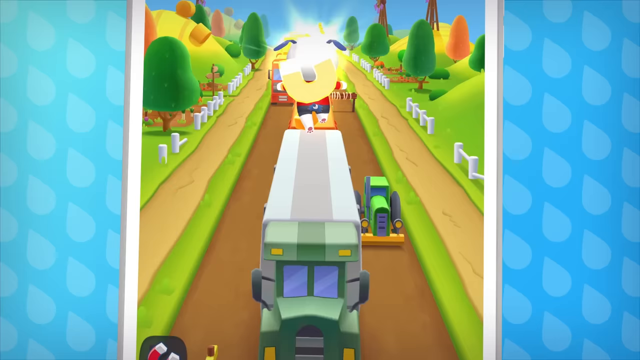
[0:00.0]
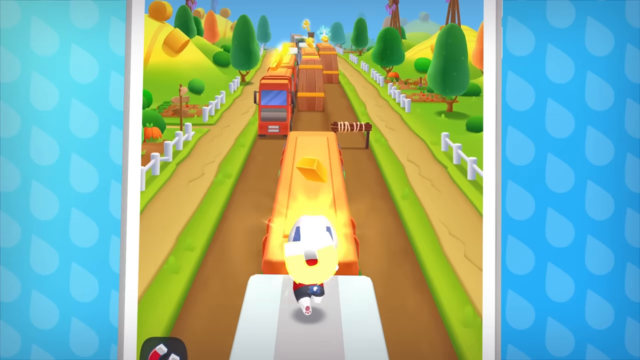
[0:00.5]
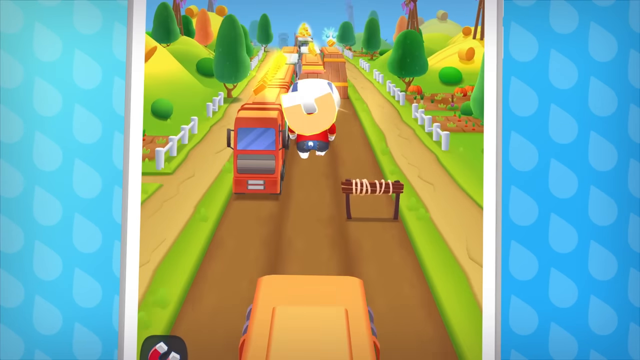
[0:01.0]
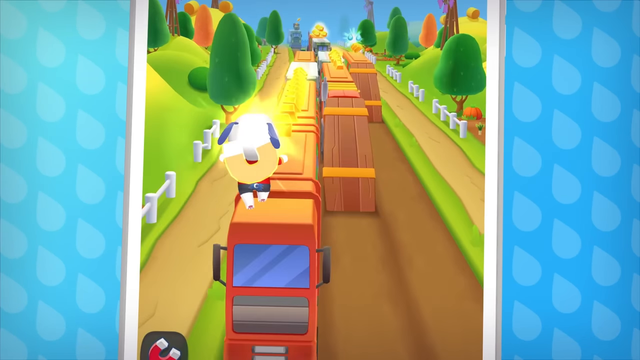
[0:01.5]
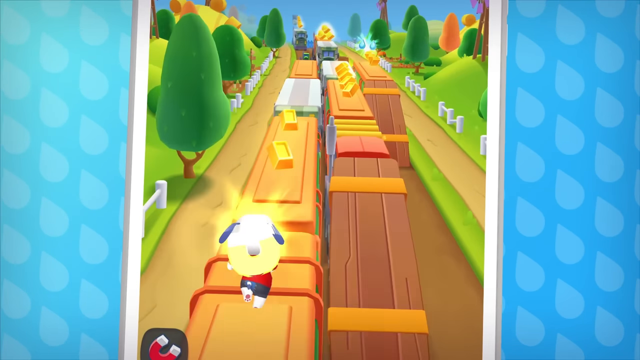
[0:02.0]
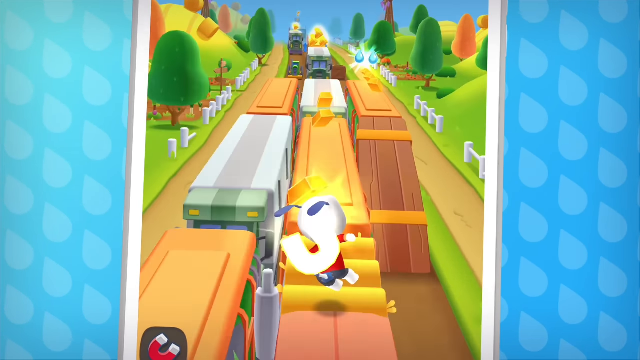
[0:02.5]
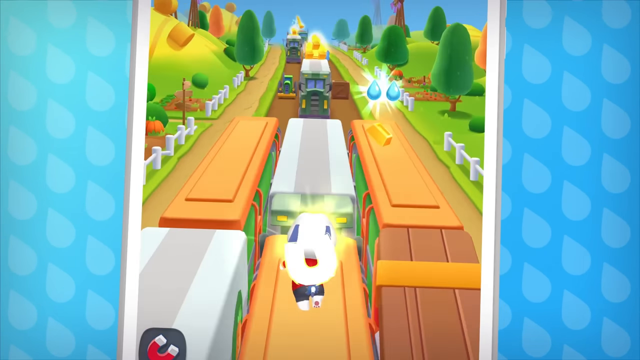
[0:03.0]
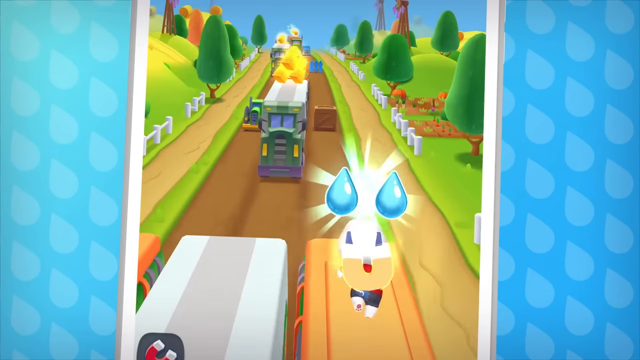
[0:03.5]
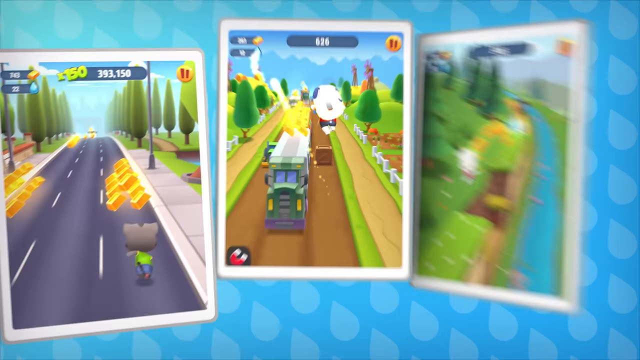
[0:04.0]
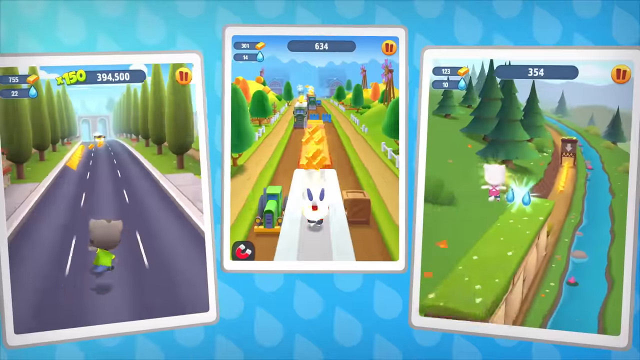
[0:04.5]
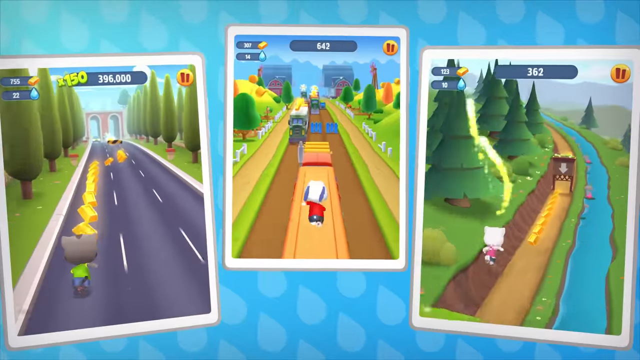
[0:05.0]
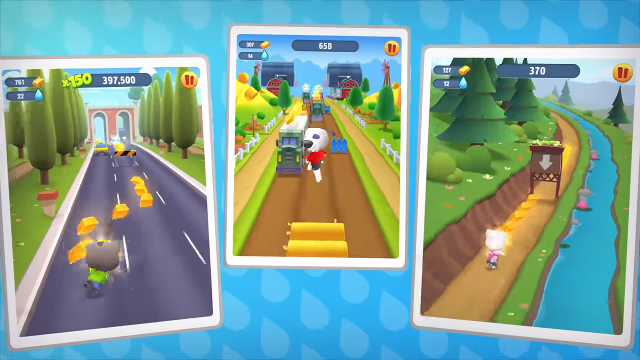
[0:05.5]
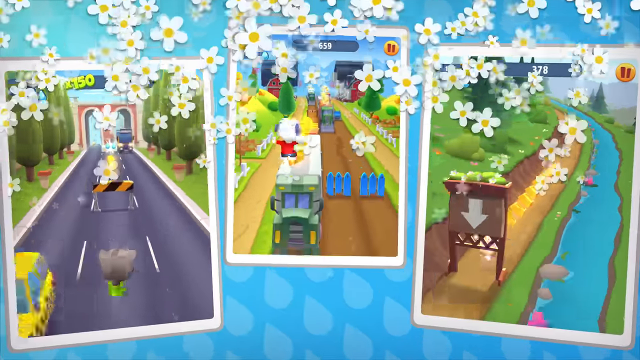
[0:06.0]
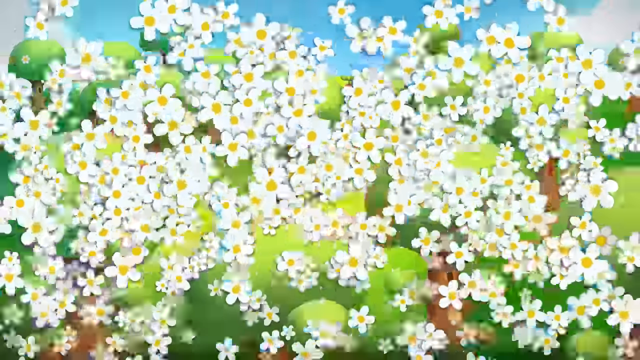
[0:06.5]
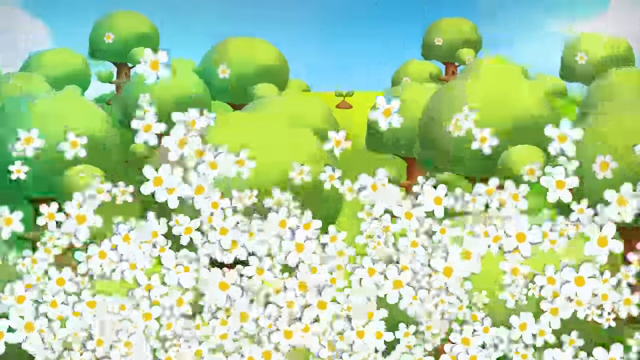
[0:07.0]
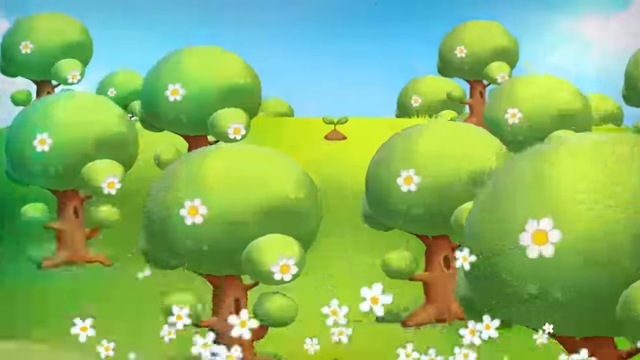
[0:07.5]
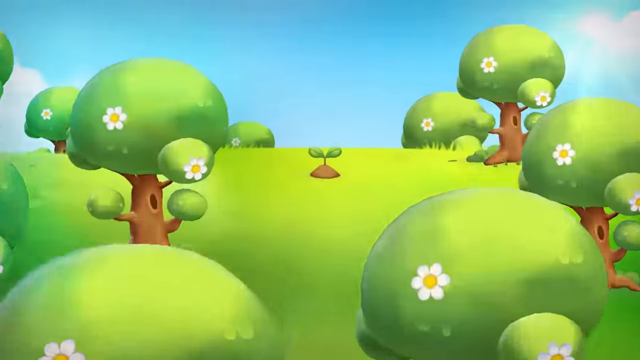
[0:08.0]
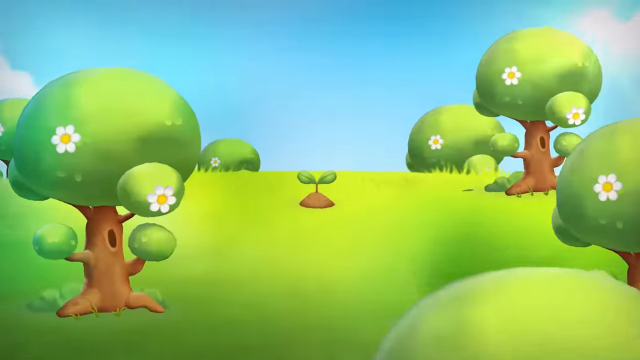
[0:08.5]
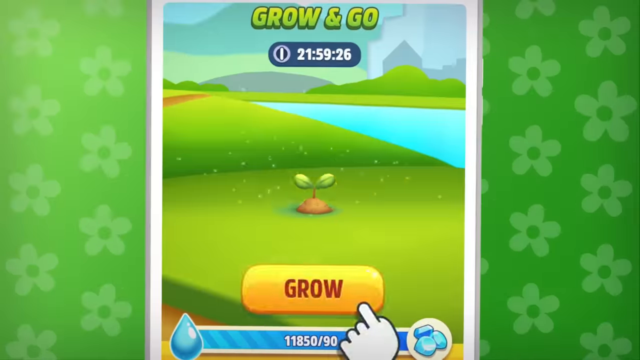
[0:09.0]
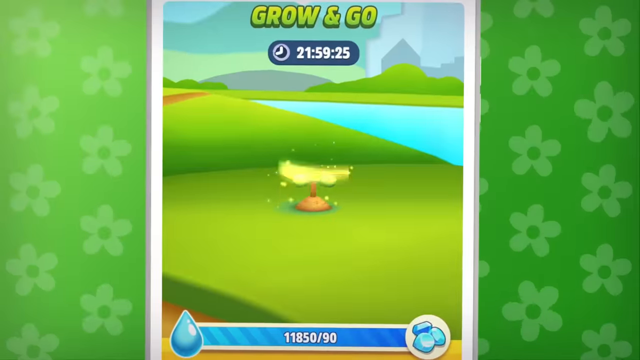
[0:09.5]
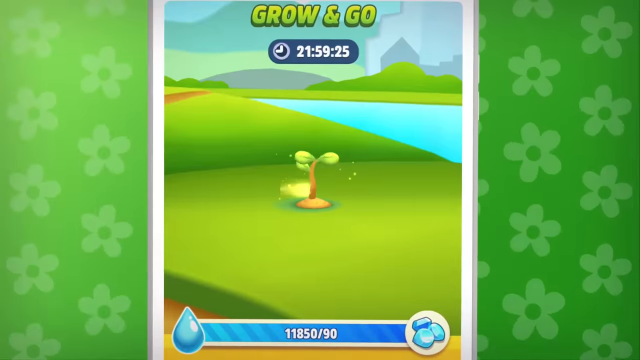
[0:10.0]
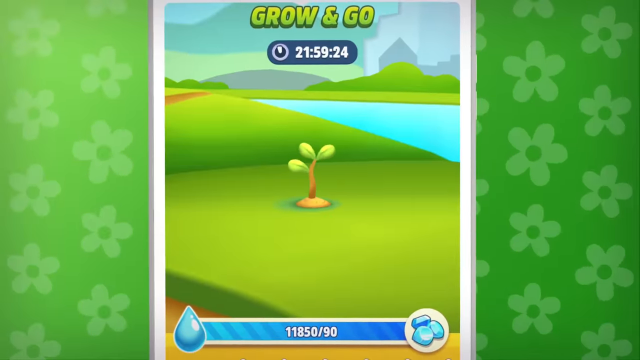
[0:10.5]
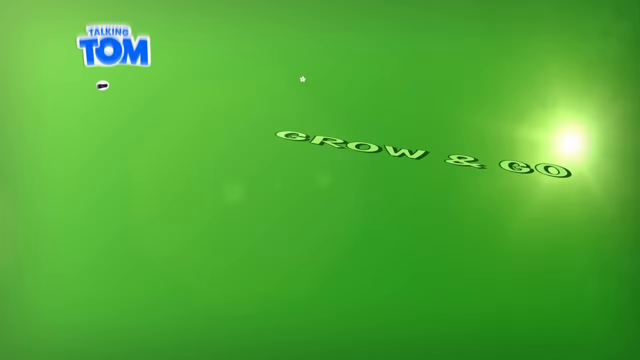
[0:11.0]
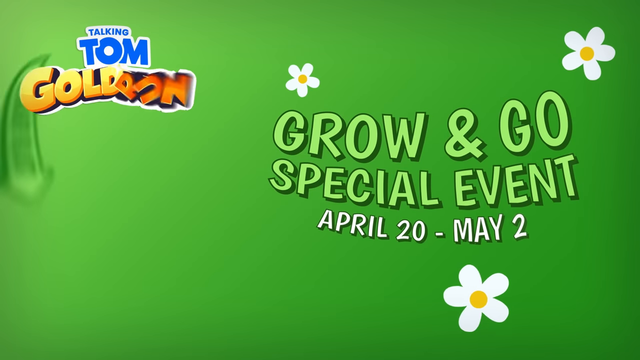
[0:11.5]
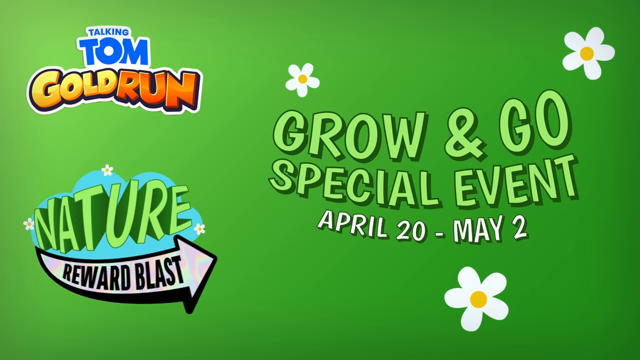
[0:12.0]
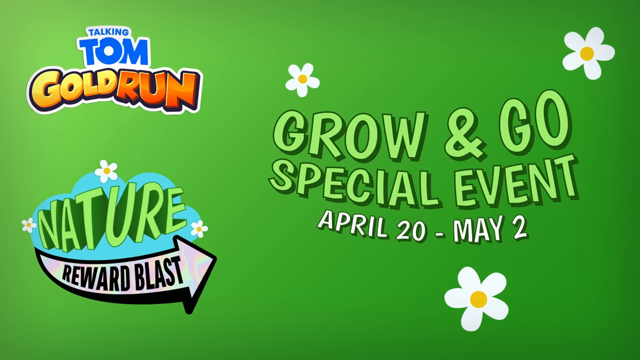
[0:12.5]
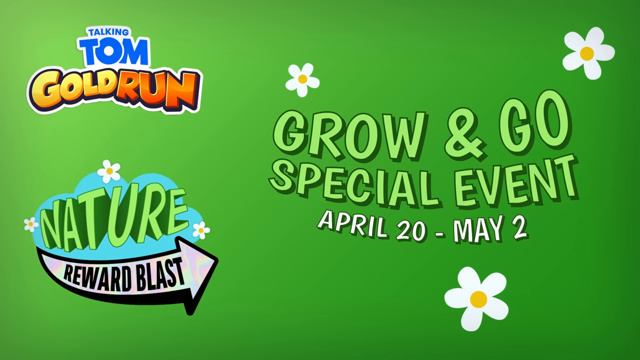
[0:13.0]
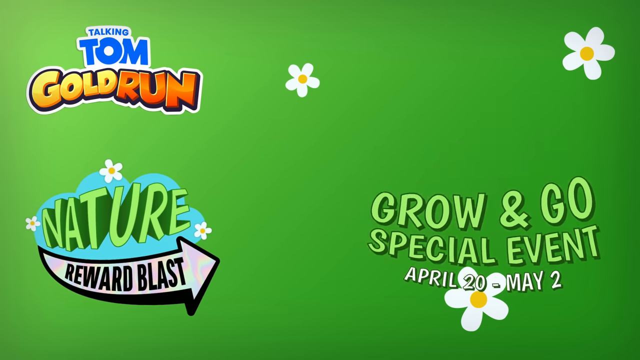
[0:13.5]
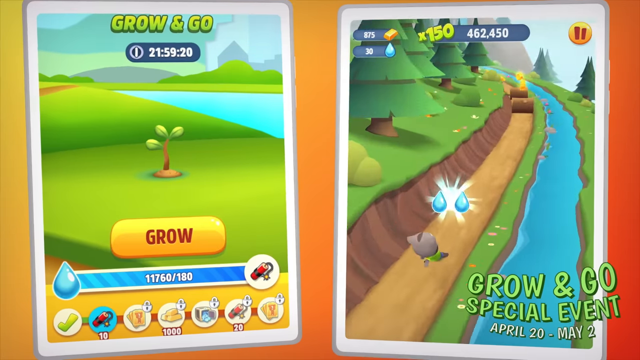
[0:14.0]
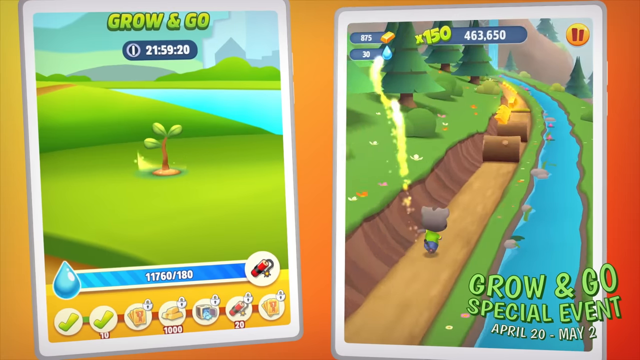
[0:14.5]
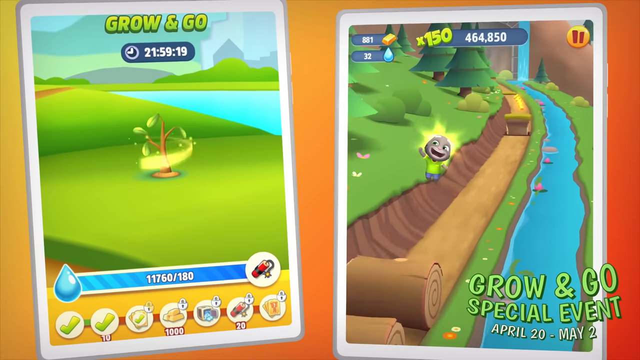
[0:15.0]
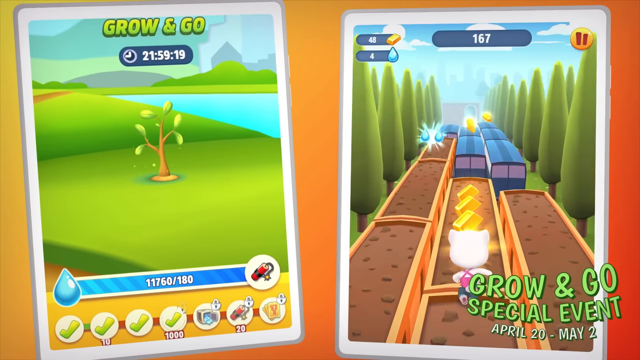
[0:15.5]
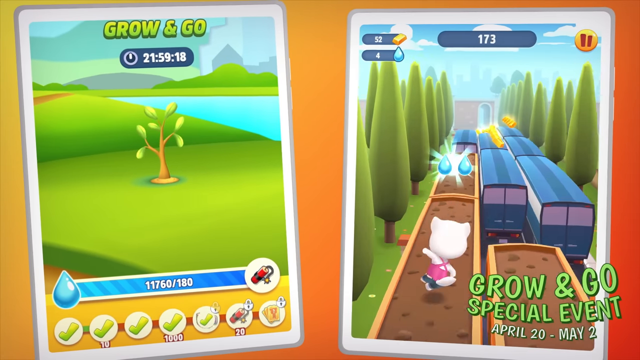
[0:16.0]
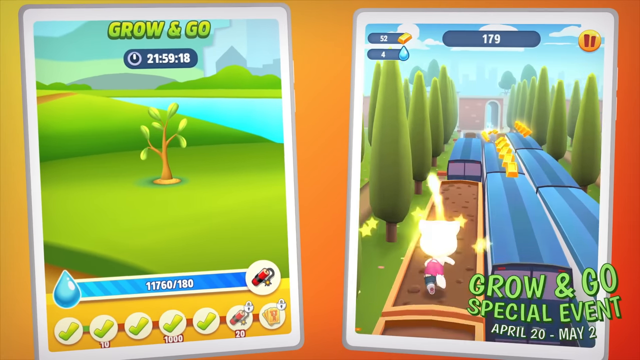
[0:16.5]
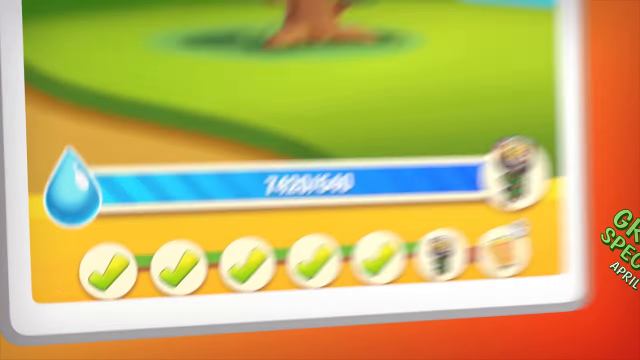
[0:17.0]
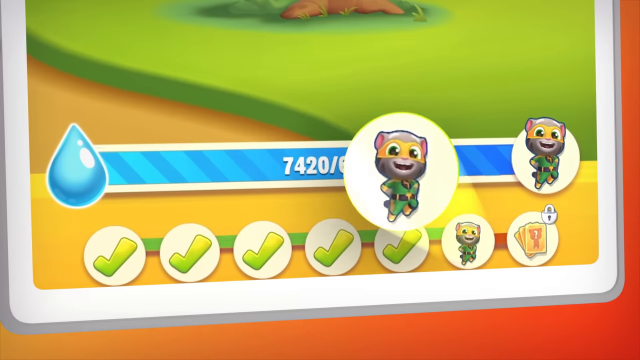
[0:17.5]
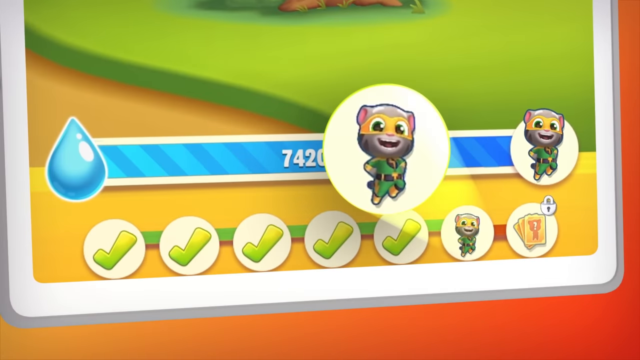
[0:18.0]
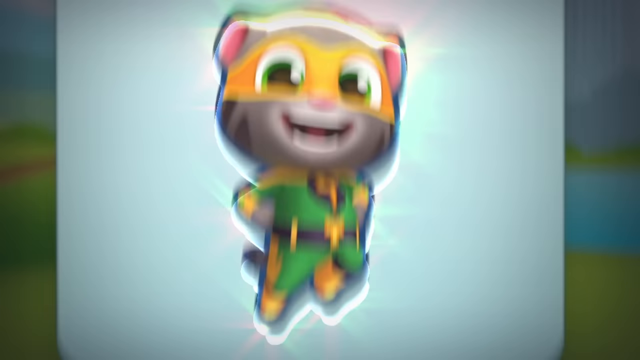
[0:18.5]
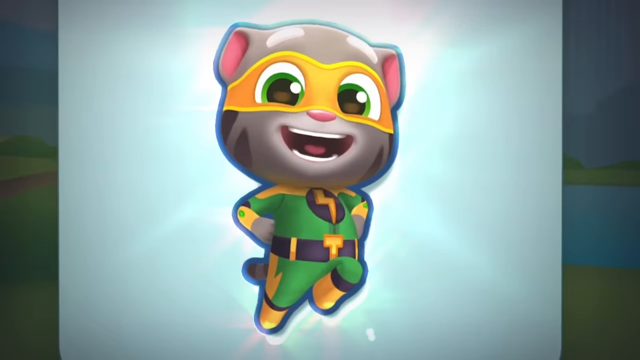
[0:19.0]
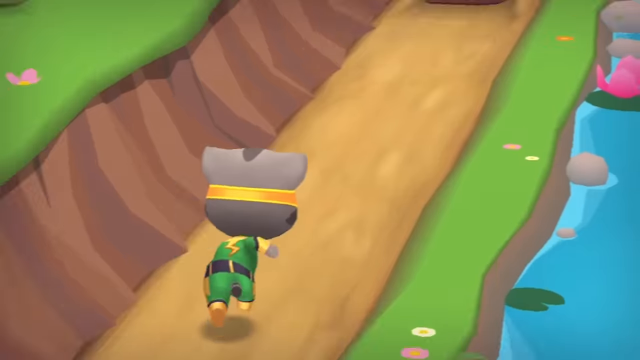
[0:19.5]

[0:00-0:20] Gameplay opens from a game apparently called Talking Tom Gold Run. Seen from above, a character that looks like it may be a dog with a horseshoe on its back runs forward, away from the viewer. It collects gold bars sitting on different vehicles on the road, which look like buses and trucks, leaping from left to right across the vehicles. Three different versions of gameplay then appear next to each other, the other two showing other characters running: one looks like a grey cat running on a road, dodging taxi cabs and other vehicles while collecting gold bars, and the other looks like a white cat running in more of a rural area, collecting gold bars. A transition screen with daisies and a field with grass and trees follows, then a screen that says "Talking Tom Gold Run Grow and Go Special Event April 20th to May 2nd". After that moment, more gameplay shows different characters running to collect gold bars. A couple of the characters available to choose are then shown, one of them a grey cat in a green suit with a lightning bolt design on it and a yellow mask.